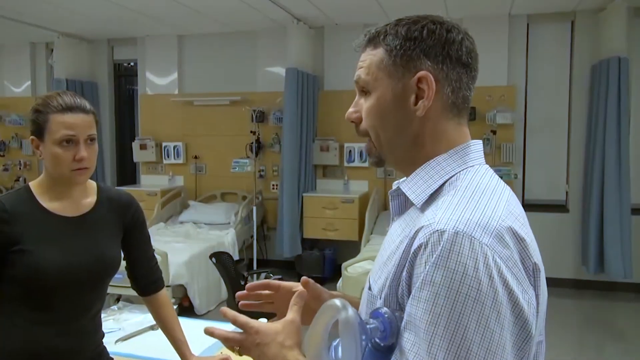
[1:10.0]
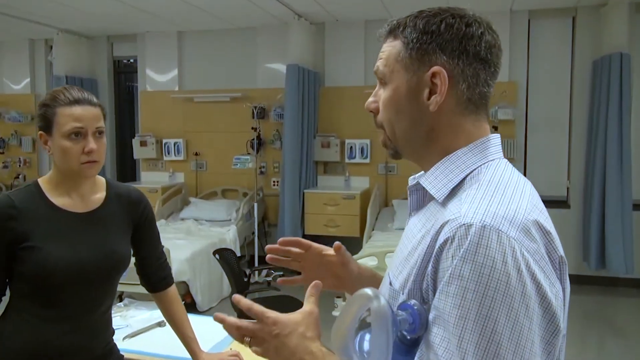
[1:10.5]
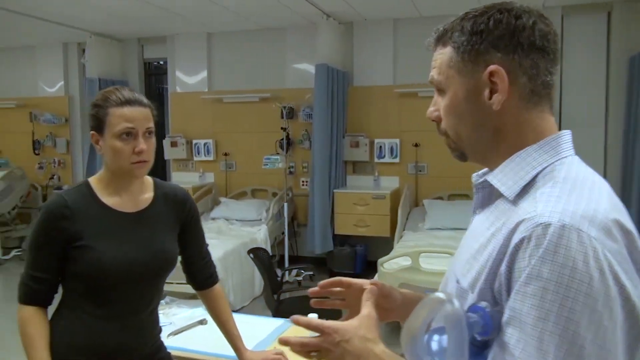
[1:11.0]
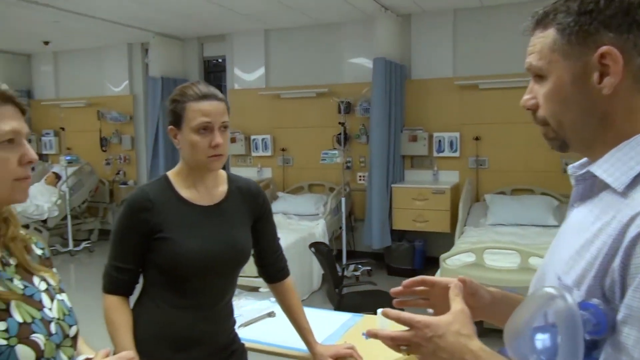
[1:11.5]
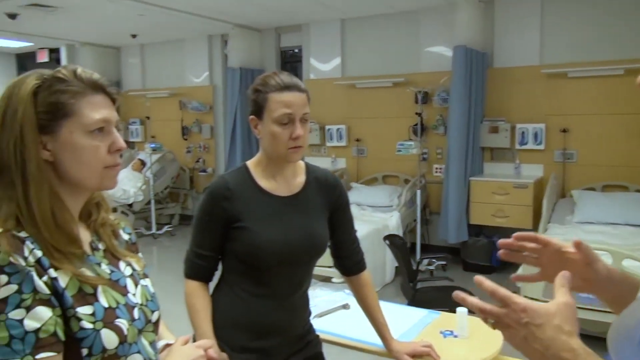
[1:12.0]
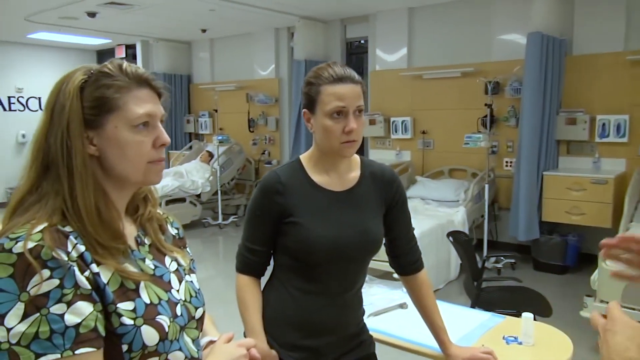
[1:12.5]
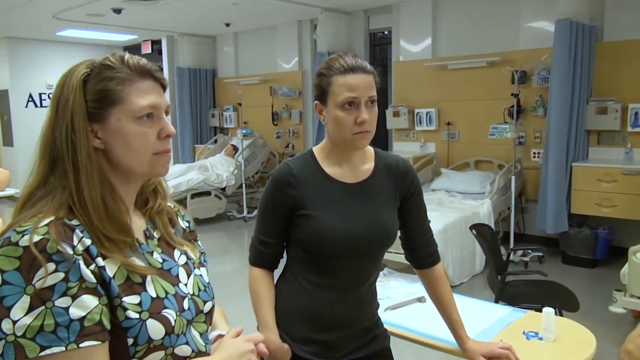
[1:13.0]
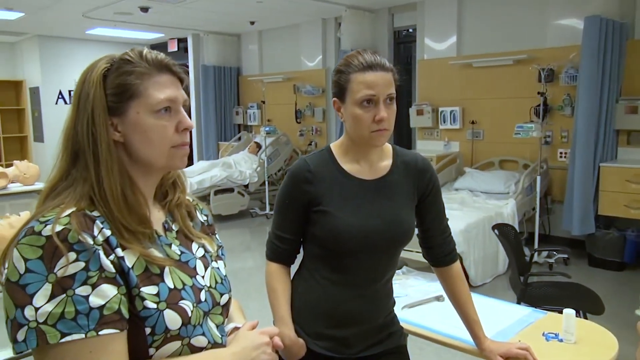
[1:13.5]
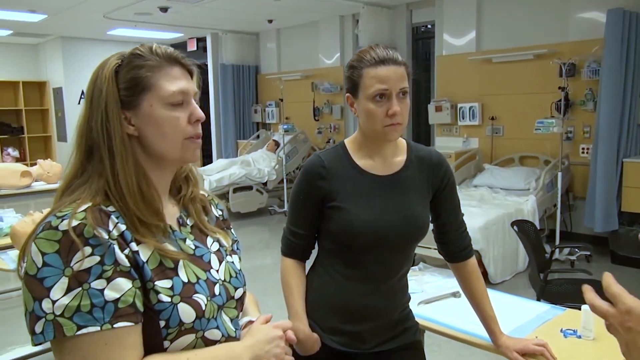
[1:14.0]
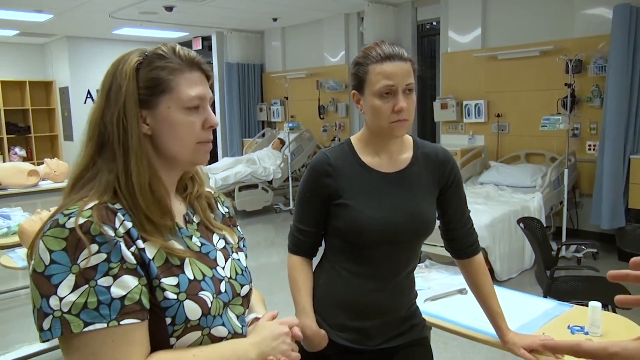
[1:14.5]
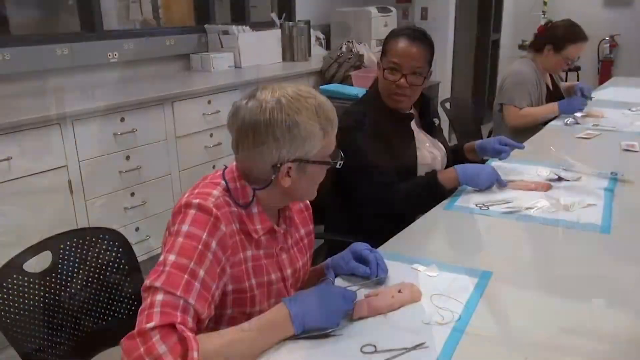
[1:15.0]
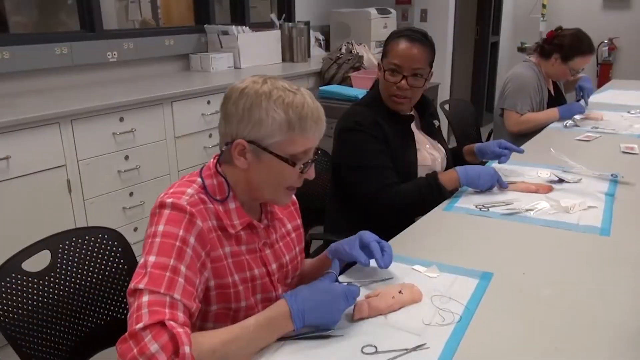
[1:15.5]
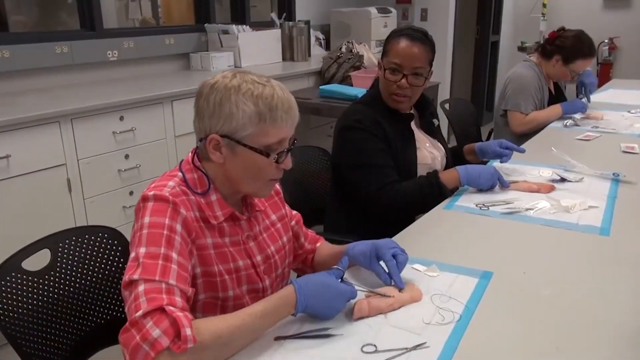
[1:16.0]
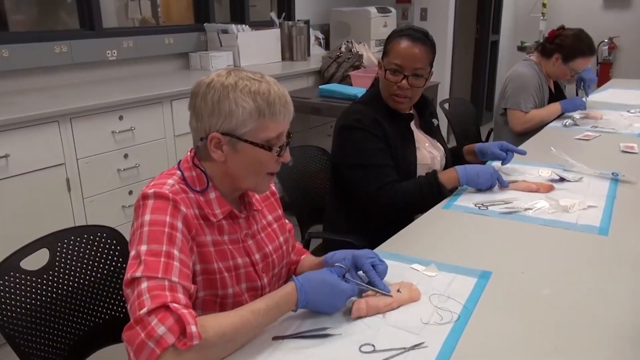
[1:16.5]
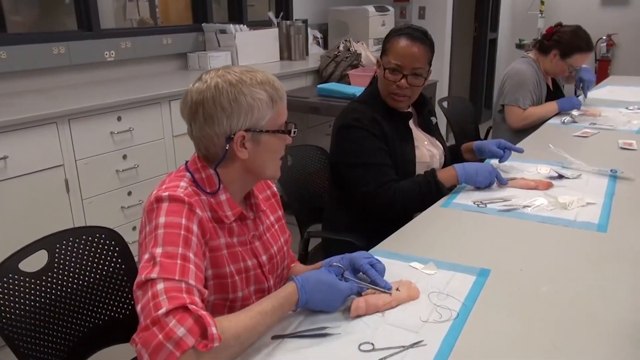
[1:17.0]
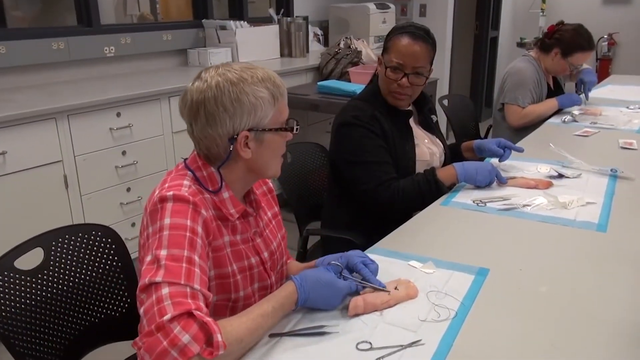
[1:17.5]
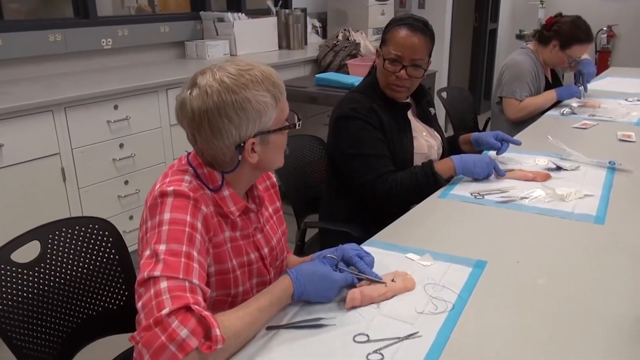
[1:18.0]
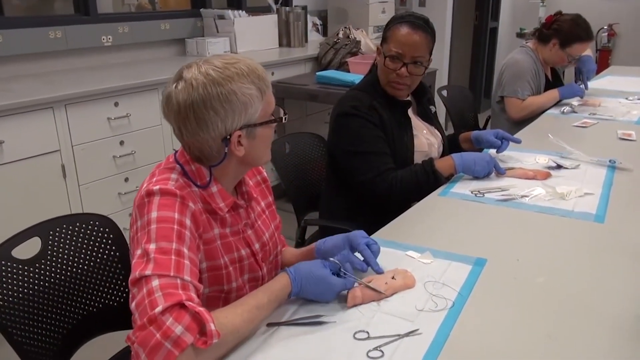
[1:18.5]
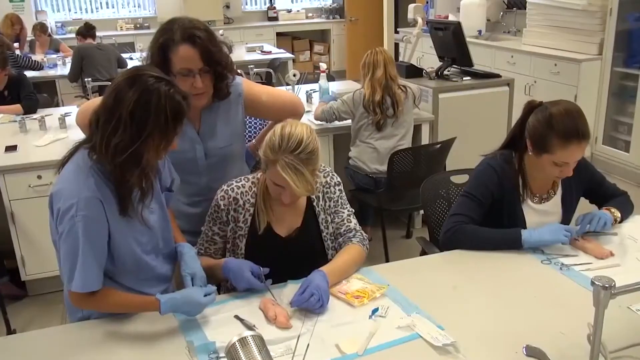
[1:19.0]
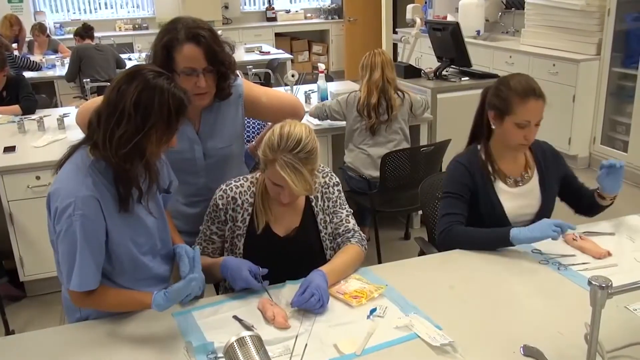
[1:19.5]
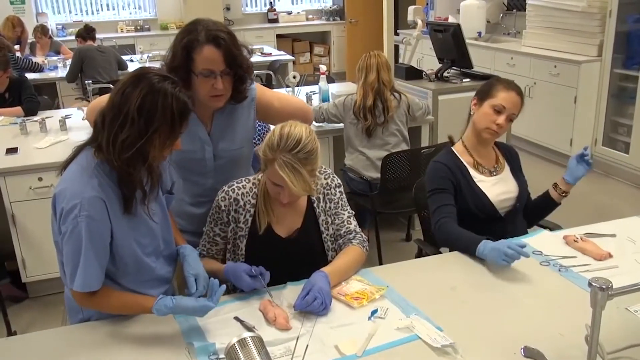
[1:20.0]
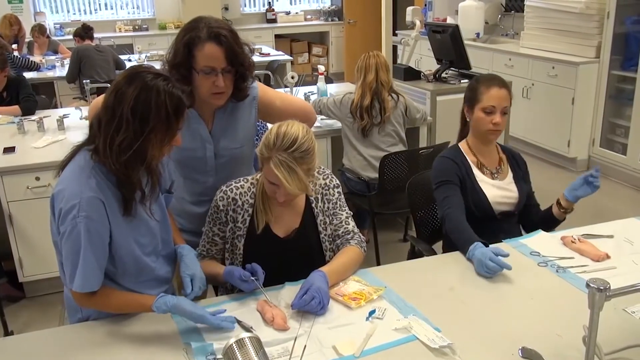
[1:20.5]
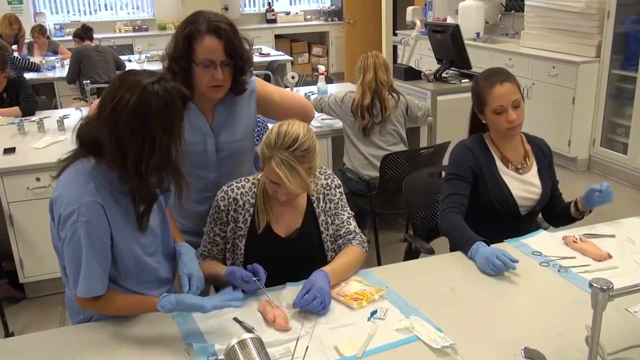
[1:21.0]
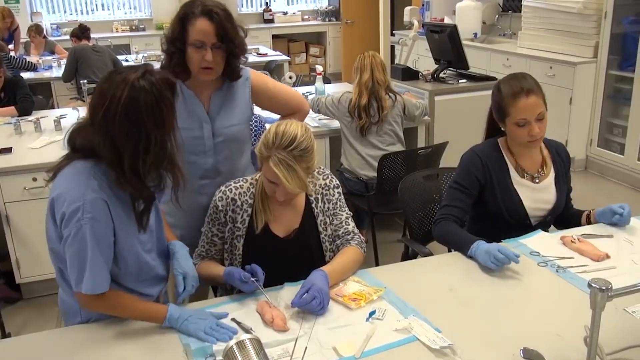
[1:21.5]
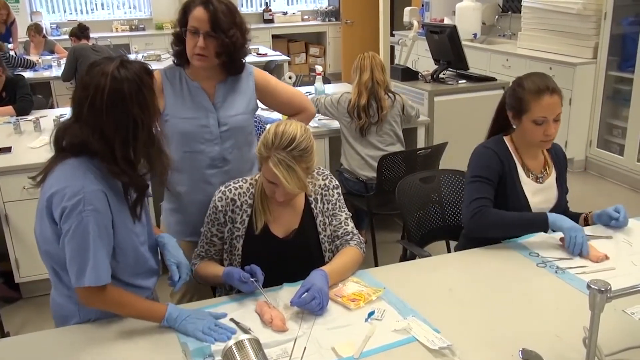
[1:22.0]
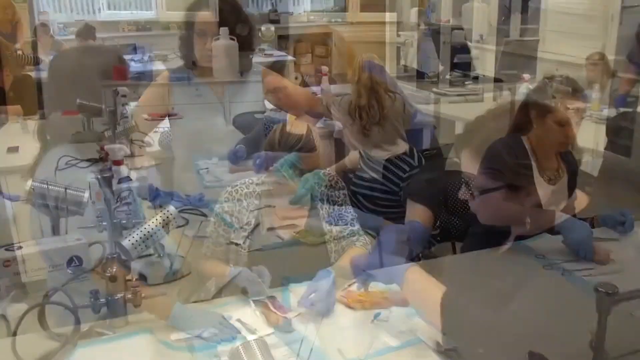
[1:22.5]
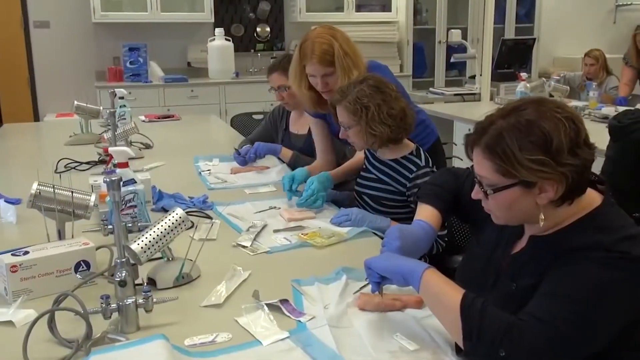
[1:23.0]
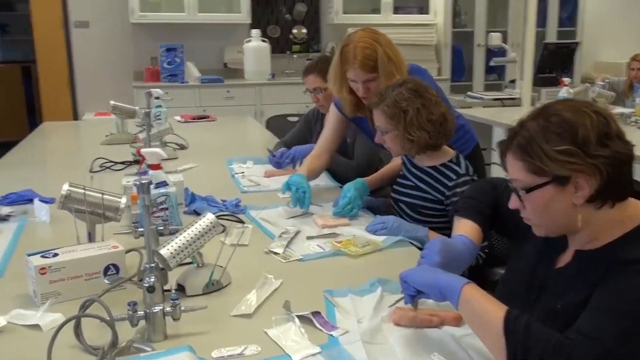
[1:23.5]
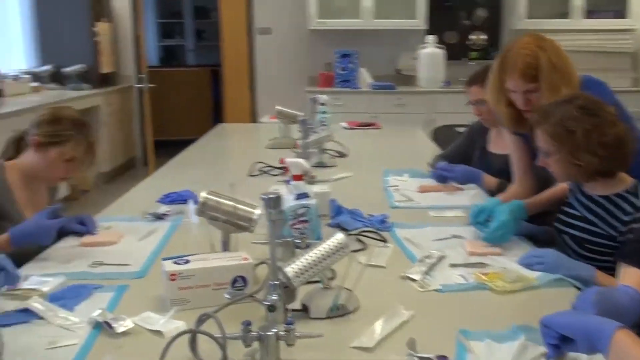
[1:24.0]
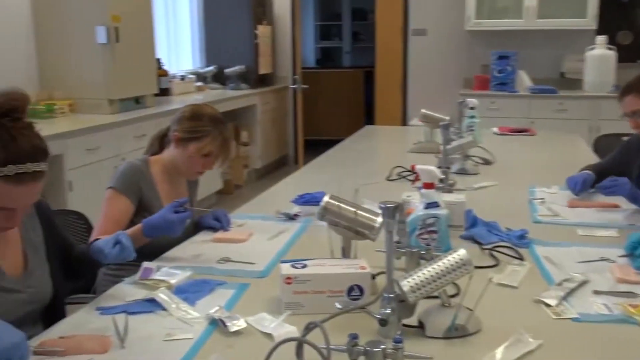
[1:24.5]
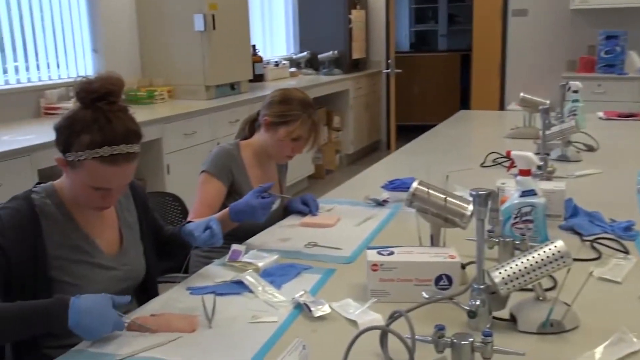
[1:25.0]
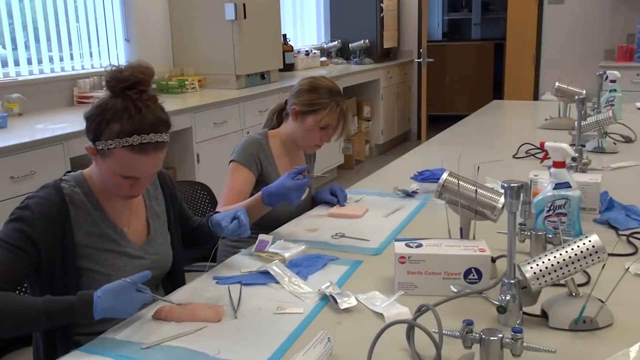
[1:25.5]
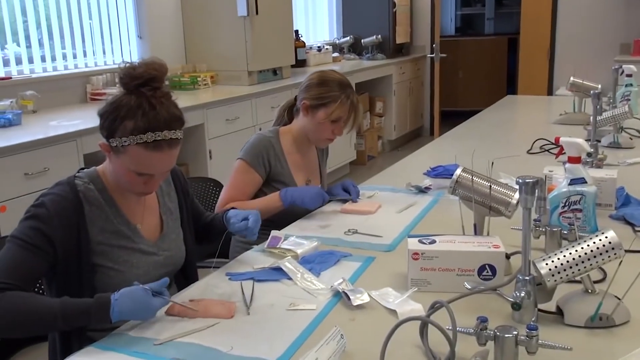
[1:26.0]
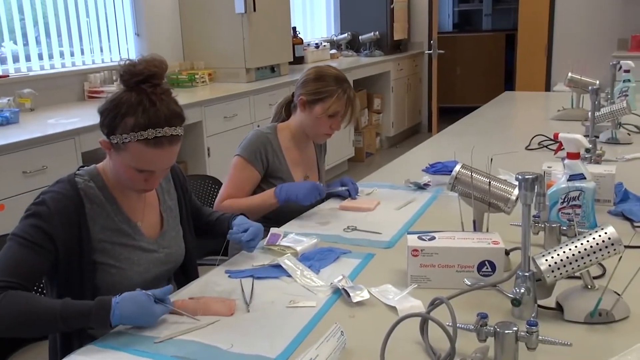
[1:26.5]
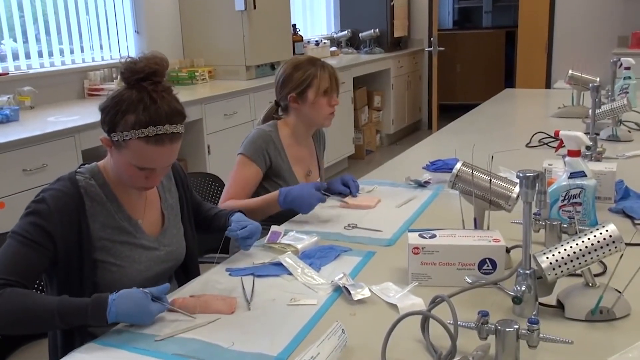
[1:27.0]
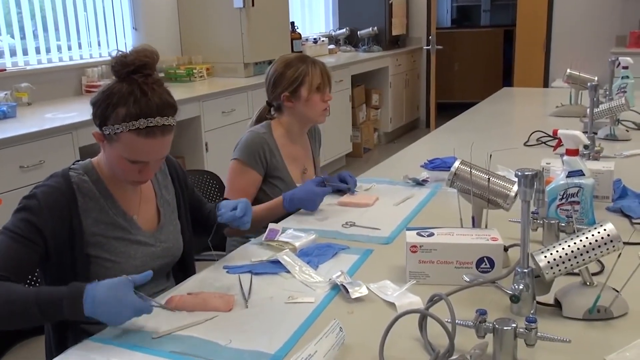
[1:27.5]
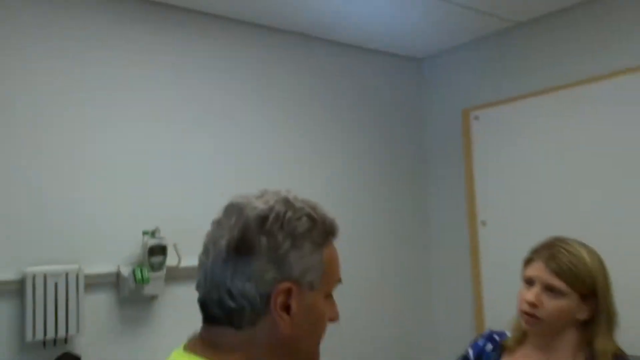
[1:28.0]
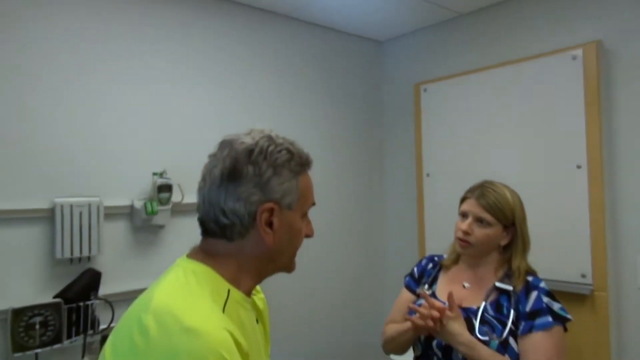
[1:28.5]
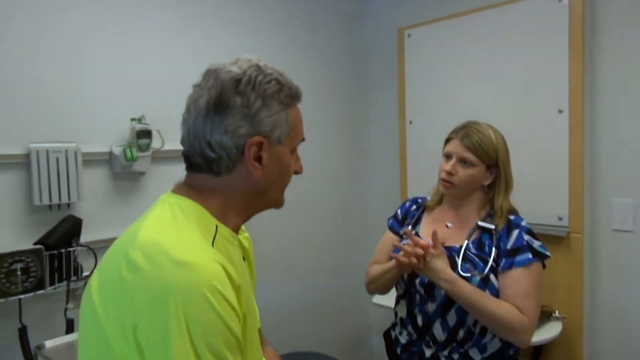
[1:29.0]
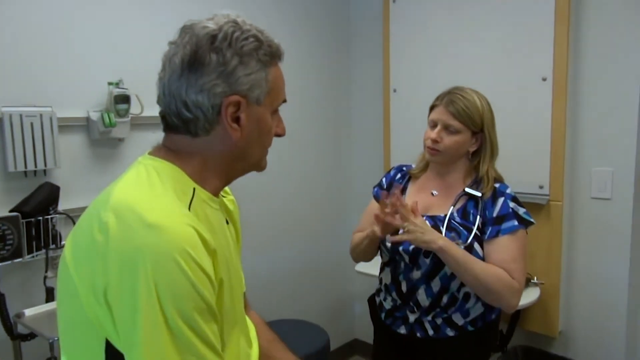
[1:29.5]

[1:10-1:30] A man with short hair and a long-sleeved striped shirt speaks to a woman in a black shirt in a clinical or hospital-like setting, with many beds in the background. The man is sort of moving his hands as he speaks, and two women listen to him. Next, at a table, a man in a red shirt and latex gloves speaks with a dark-skinned woman with glasses who also wears latex gloves; they sit at the table using some tools that look like scissors and sort of just speak. Another station or table shows four other women, many different types of women, wearing latex gloves and also using tools to work on something. The next scene shows a woman in a blue shirt talking to a man in a yellow shirt who wears glasses.